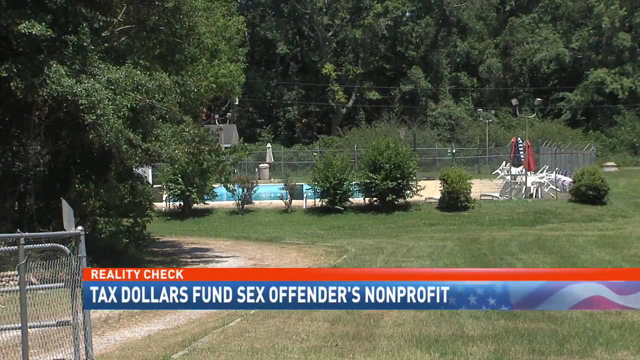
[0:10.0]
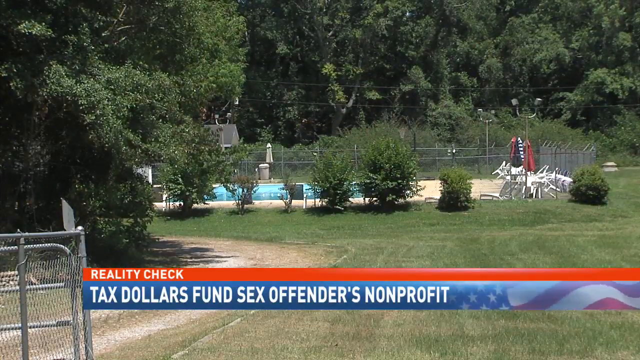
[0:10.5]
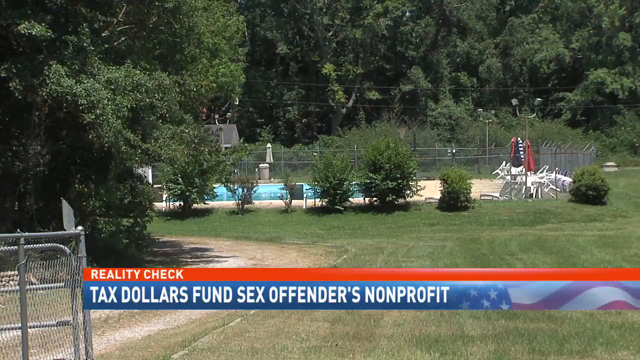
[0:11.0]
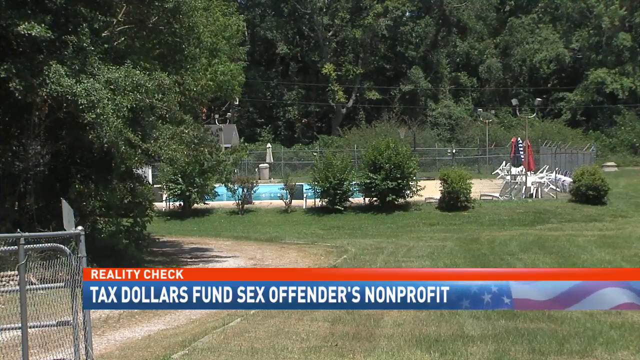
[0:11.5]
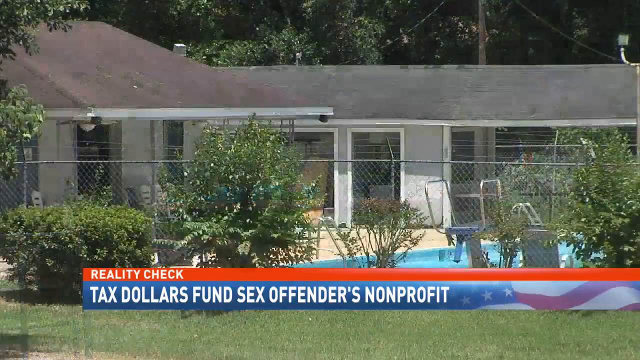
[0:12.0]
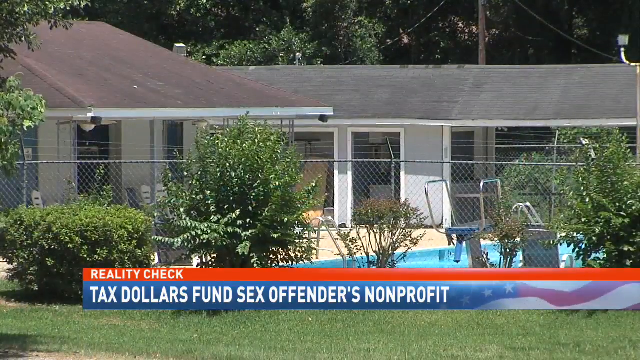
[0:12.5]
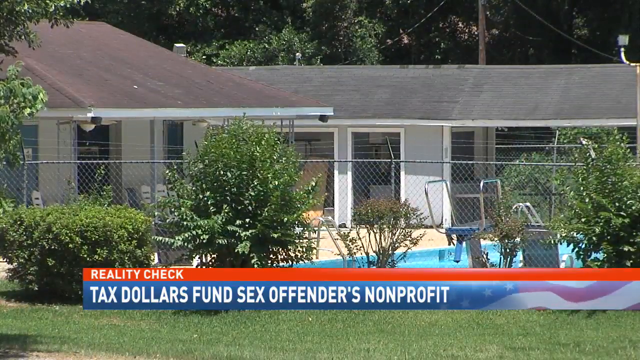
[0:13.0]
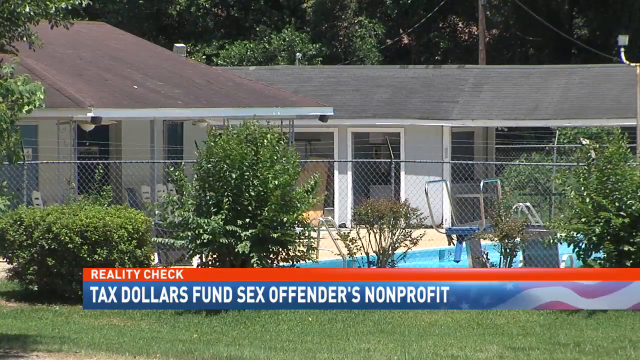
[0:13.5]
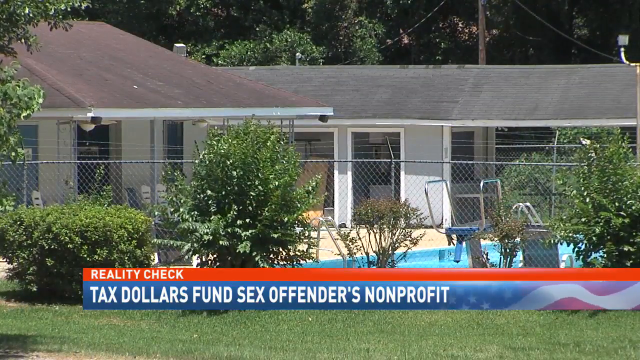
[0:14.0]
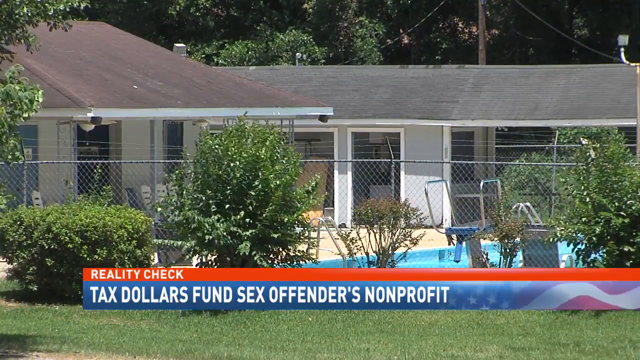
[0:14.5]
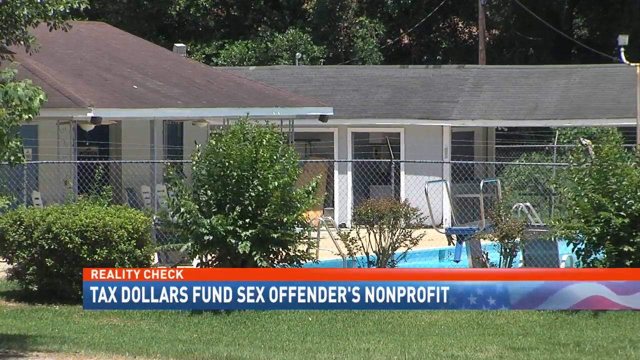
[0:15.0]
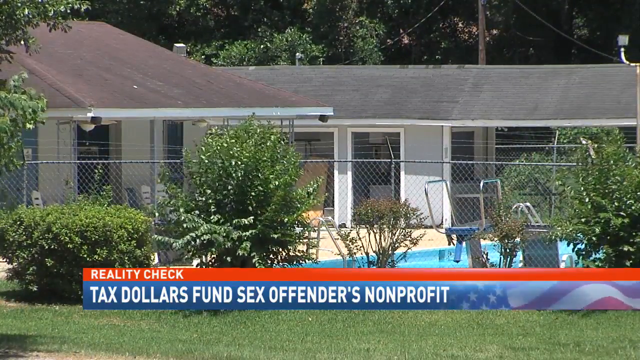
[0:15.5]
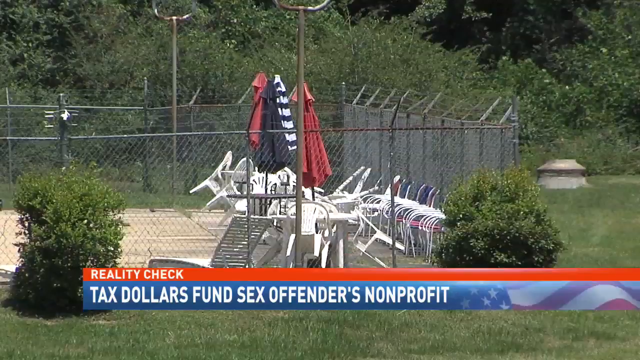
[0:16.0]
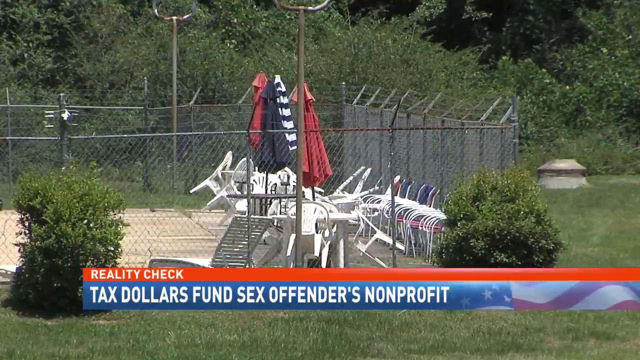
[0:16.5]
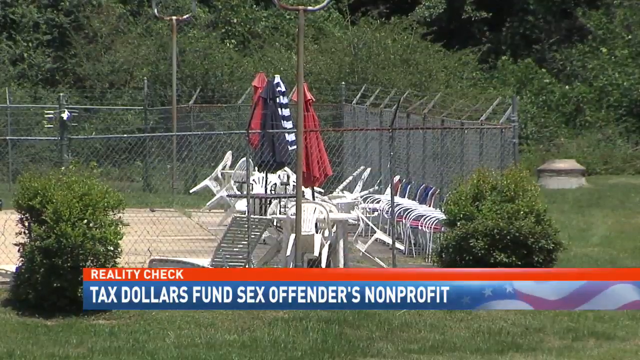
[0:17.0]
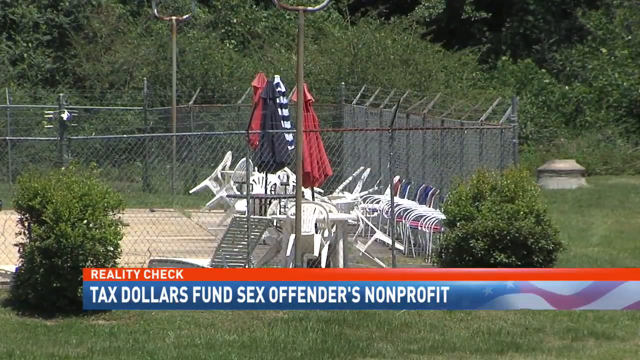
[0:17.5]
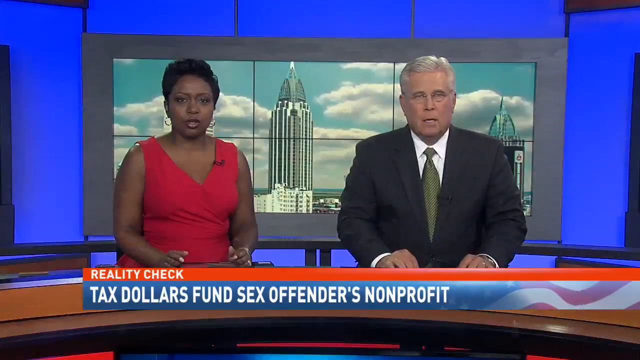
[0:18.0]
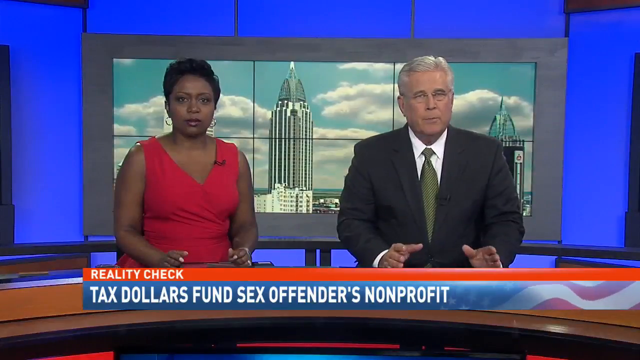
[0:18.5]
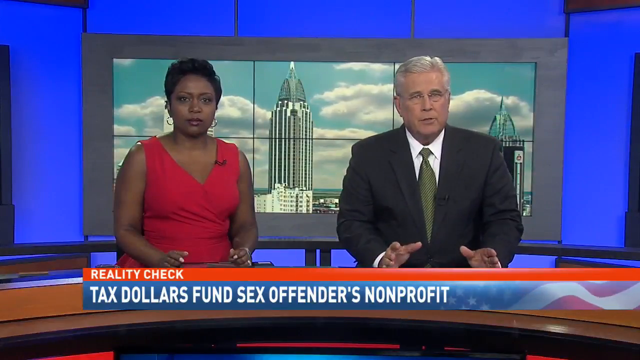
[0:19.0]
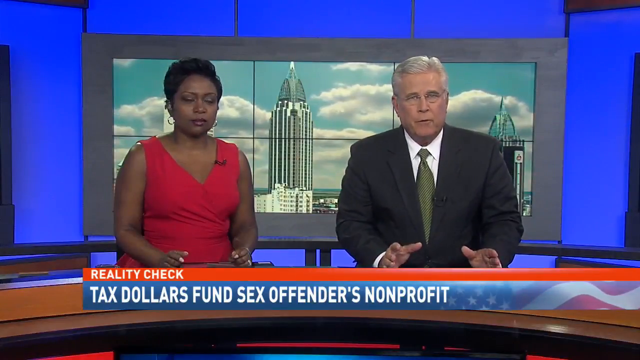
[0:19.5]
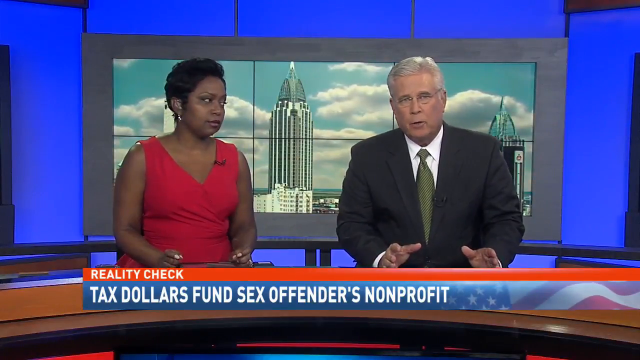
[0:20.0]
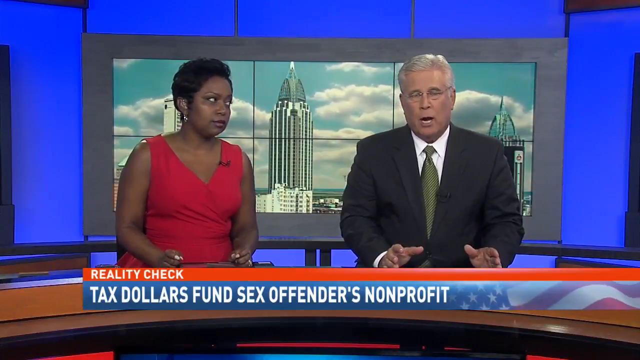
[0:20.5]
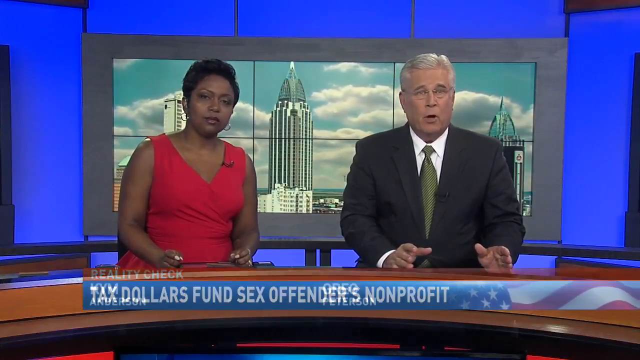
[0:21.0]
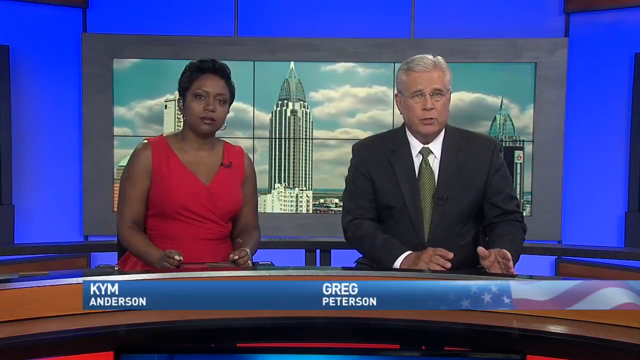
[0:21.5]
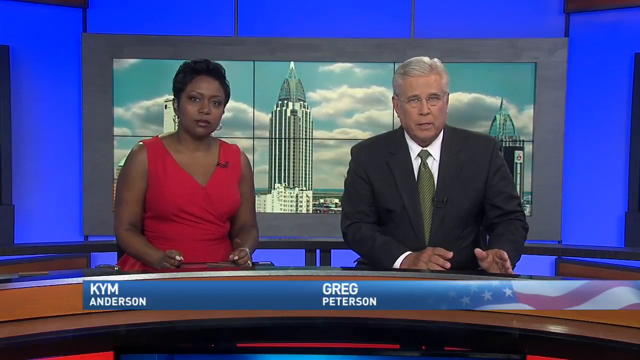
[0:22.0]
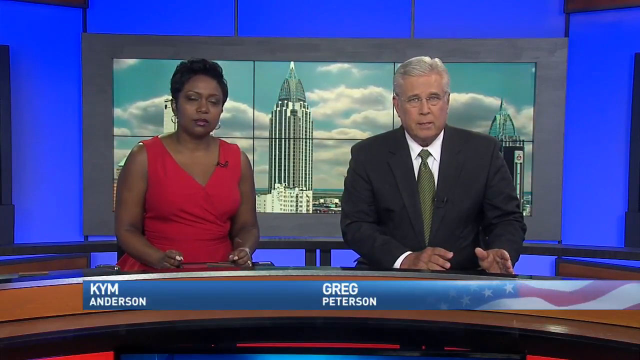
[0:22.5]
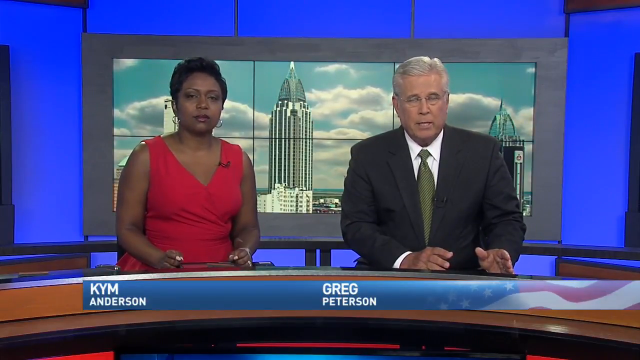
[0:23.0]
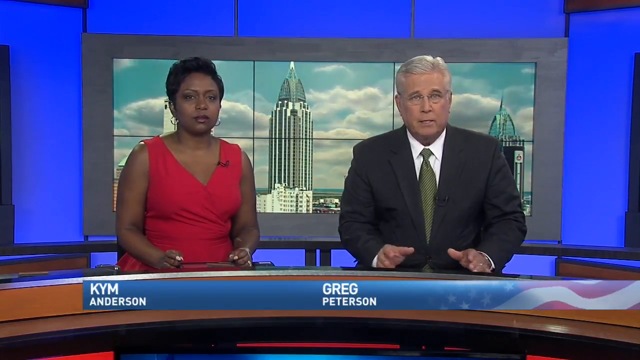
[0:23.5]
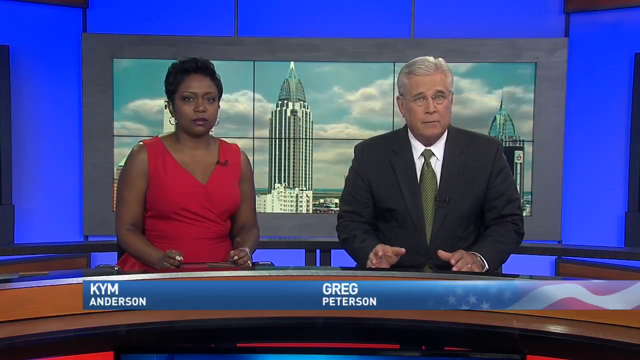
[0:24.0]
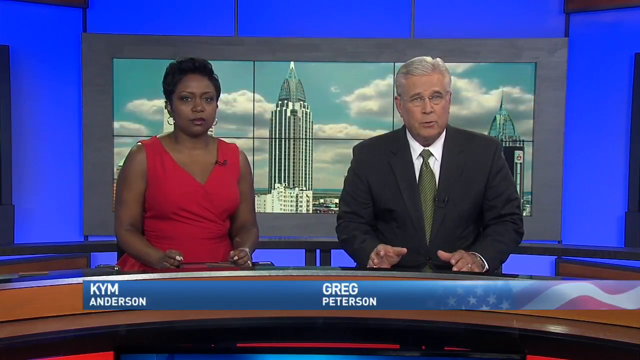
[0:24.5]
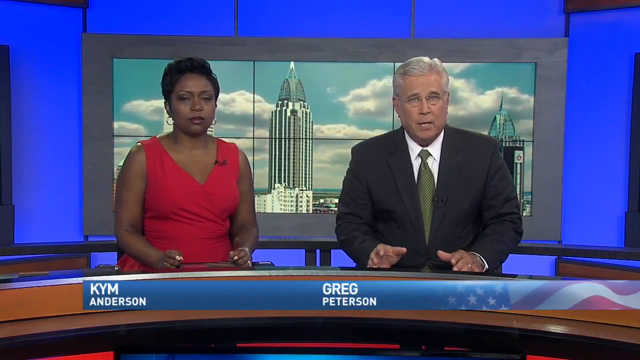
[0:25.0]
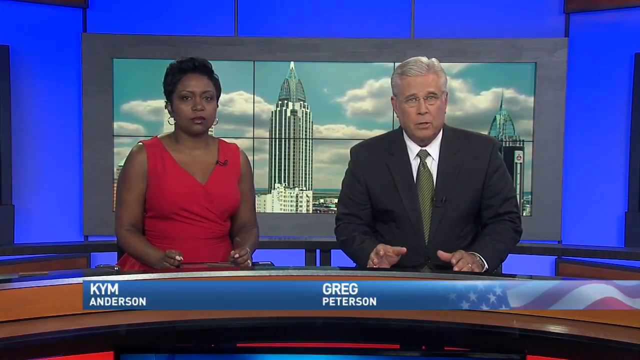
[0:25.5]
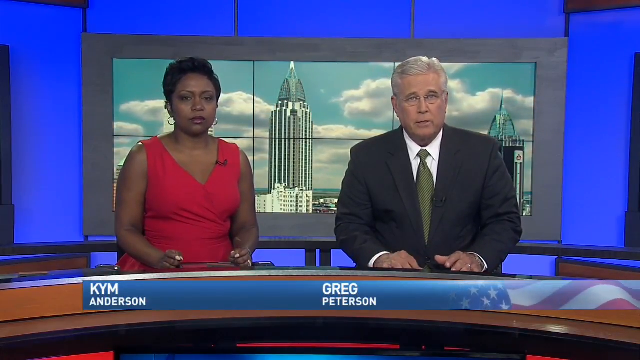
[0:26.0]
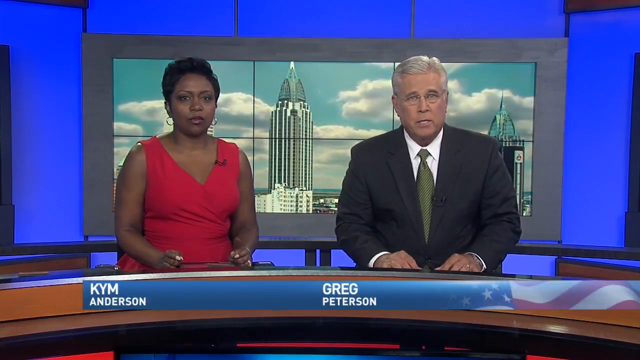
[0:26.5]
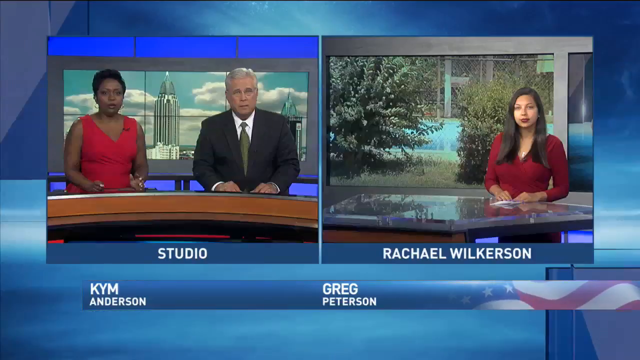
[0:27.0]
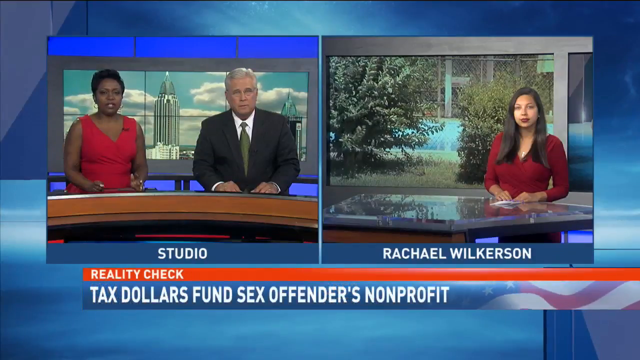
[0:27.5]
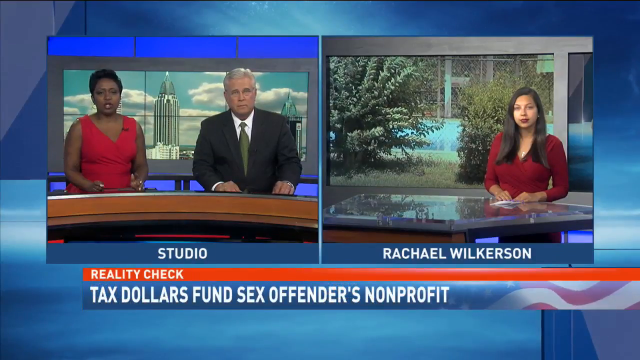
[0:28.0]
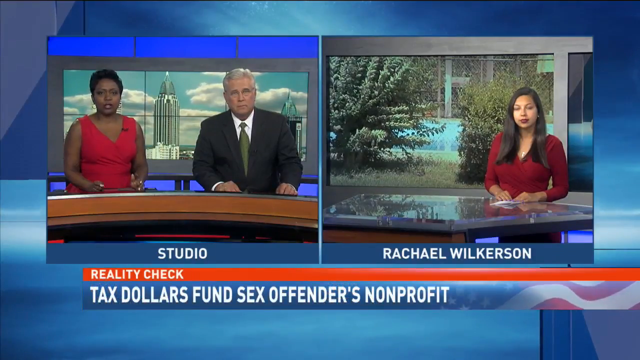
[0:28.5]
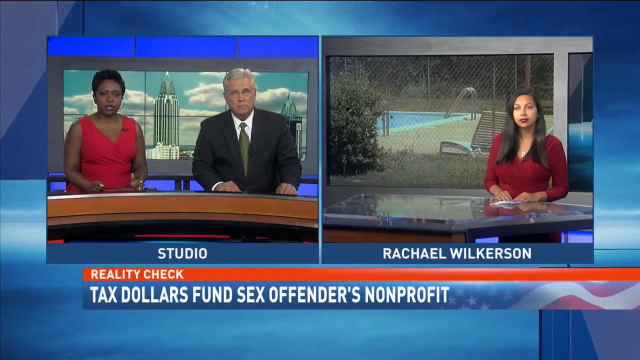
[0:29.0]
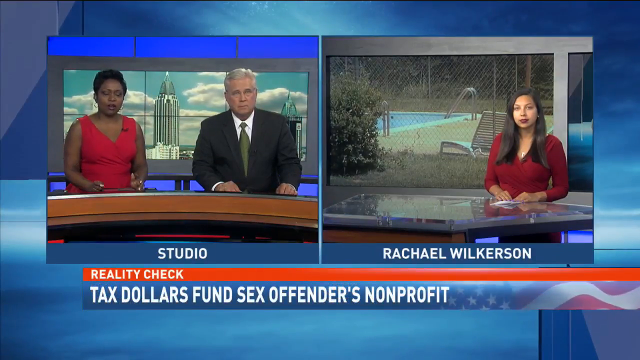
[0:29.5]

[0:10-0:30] A white house with a gray roof is in front of a pool, with the text "reality check" and "tax dollars fund sex offenders non-profit" underneath. There is a large tree toward the left and a bush, a diving board into the pool, and a large forest in the background. The scene changes to pool chairs: probably about 30 white pool chairs are leaned up, apparently so they will not be rained on, along with four pool umbrellas. The area is surrounded by a fence with barbed wire at the very top, with a bush in front of the fence on the right and one on the left. The umbrellas are red, then white and blue striped, then black, then red. A large forest is in the background, and what appear to be two large lampposts, one in the foreground and one in the background, connect with the fence.